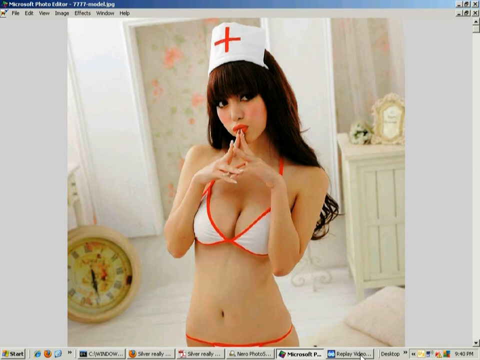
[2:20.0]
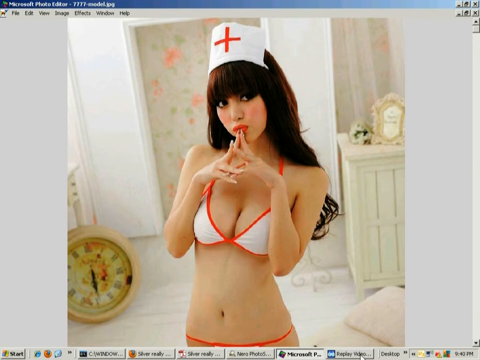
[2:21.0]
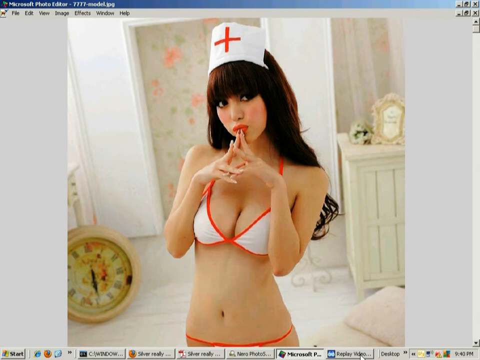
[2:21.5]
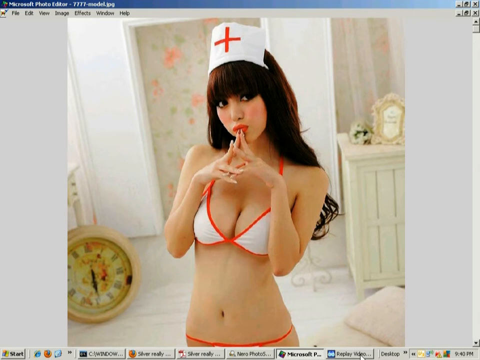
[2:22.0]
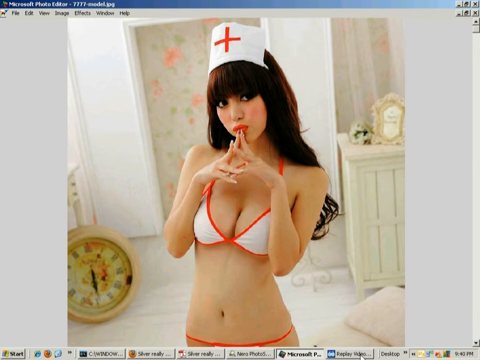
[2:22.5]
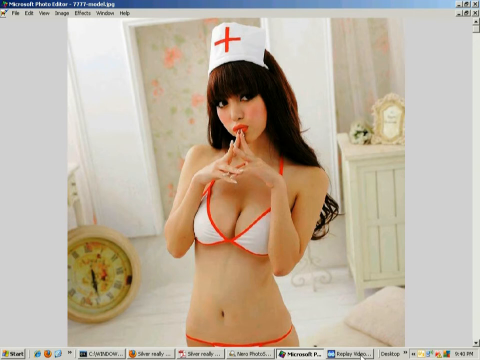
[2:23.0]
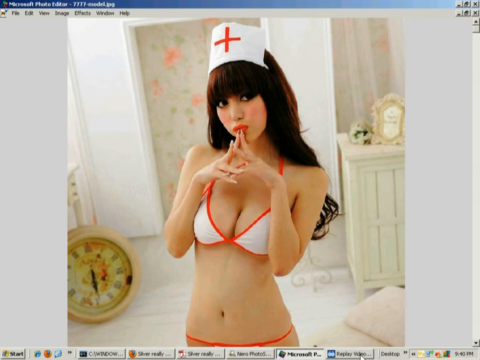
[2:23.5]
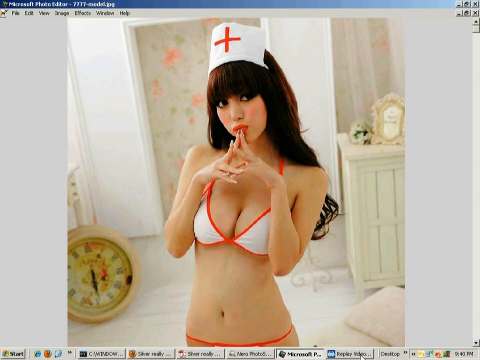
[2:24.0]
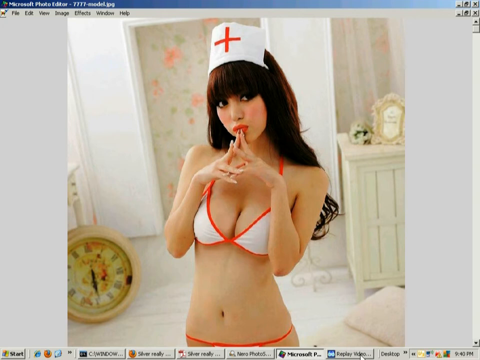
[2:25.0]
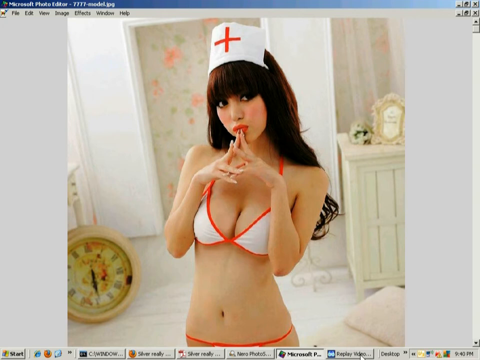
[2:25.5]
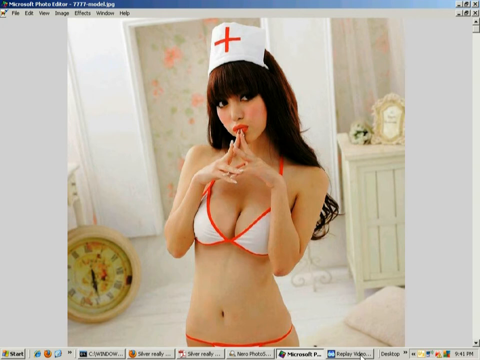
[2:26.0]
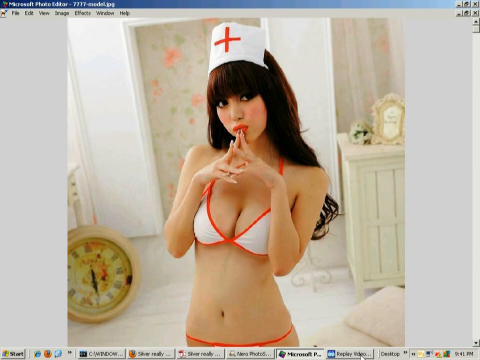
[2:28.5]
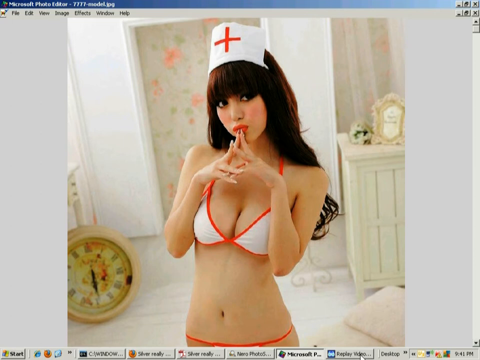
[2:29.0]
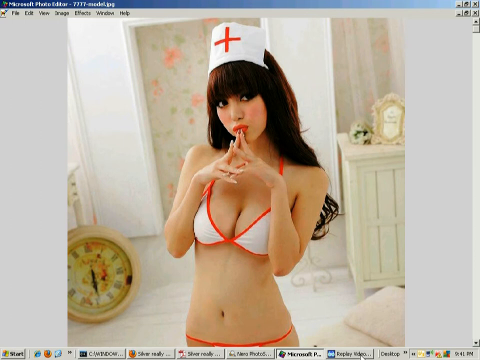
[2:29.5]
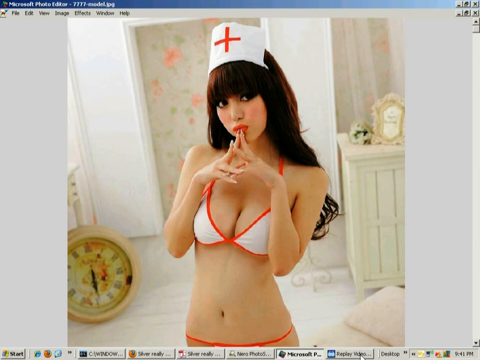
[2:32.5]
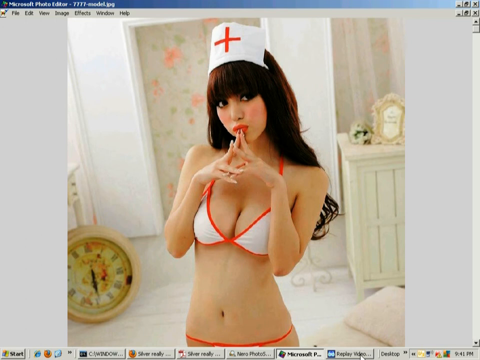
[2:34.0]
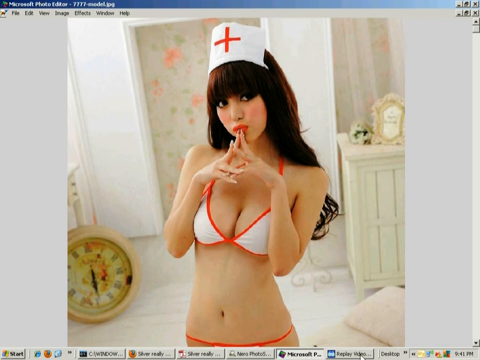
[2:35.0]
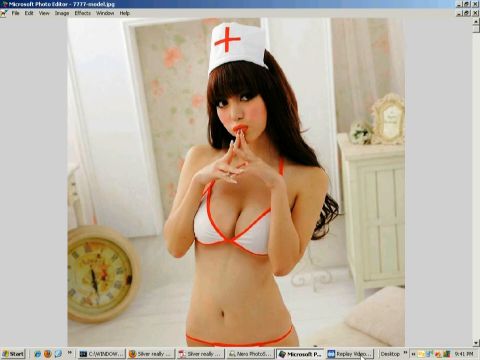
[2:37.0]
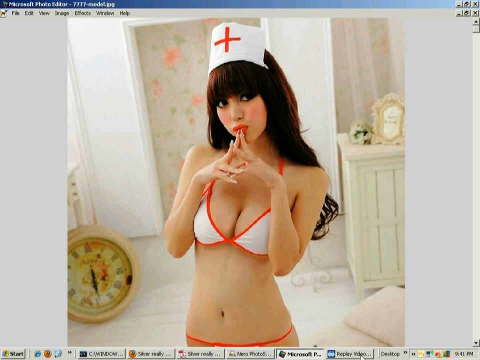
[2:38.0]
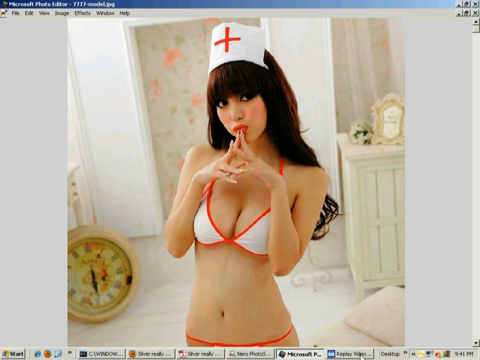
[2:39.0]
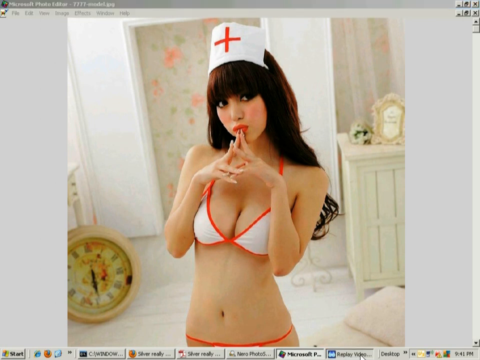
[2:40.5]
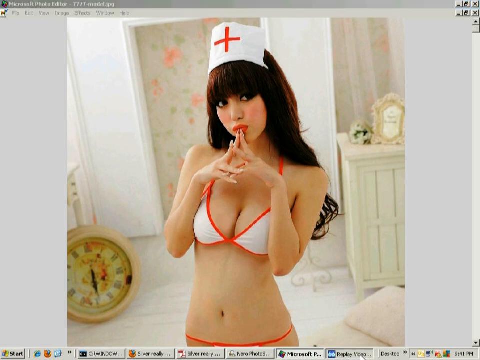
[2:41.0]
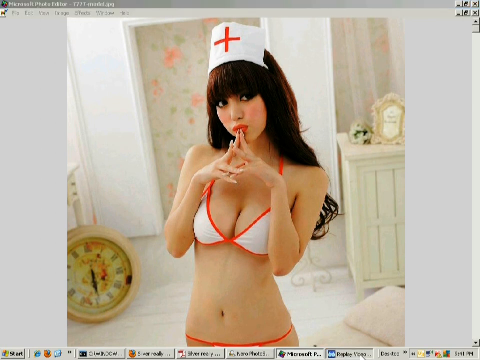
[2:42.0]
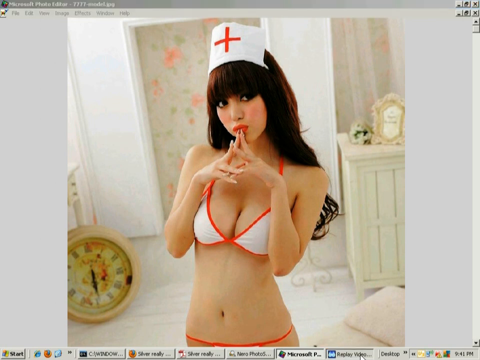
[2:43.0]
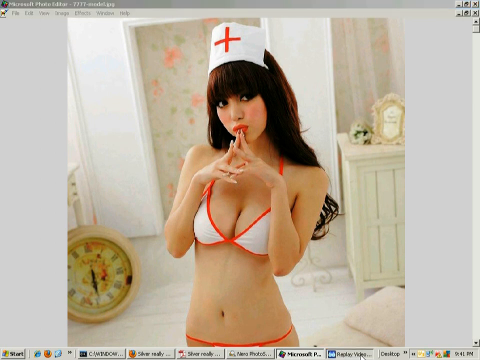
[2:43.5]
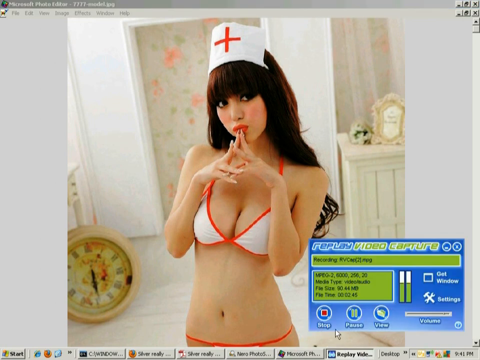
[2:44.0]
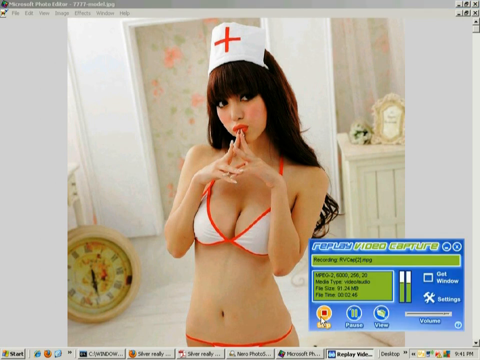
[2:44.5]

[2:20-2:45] The half-naked woman faces the viewer, looking seductively at the camera; her nails are done, she is skinny, and her seductive clothes are black and white. In the background there is a clock on the floor and, on the other side, a chest of drawers with a photo and flowers on it. The room looks like a bathroom. Microsoft Photo Editor is still open on the computer, along with the other apps, with Firefox, Nero and other tabs open at the bottom. The minimize and close buttons at the top and the area at the bottom right showing network connections indicate a very old version of Windows. The clock on screen reads 9.41 p.m.